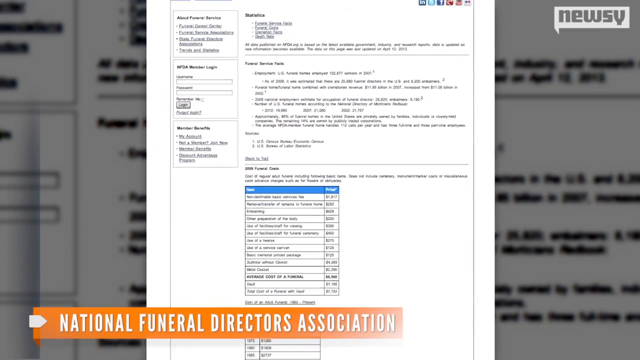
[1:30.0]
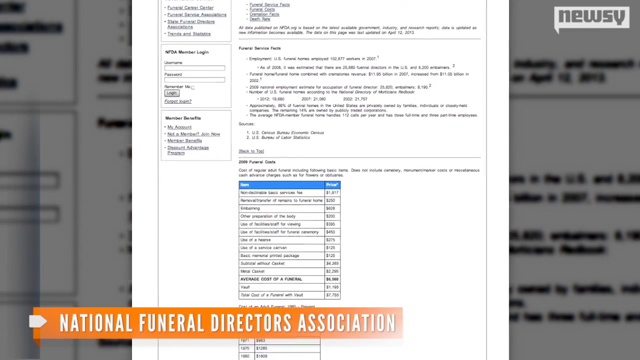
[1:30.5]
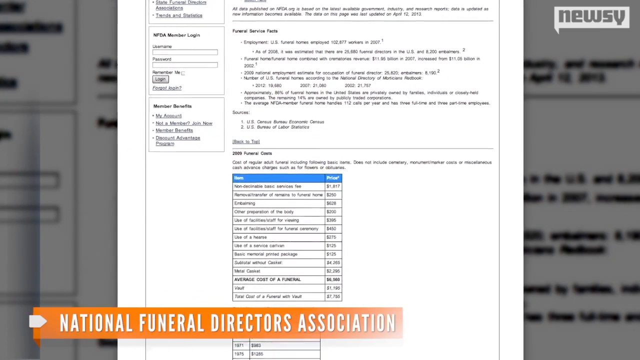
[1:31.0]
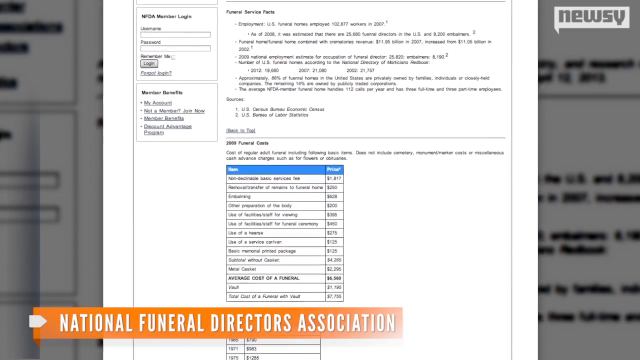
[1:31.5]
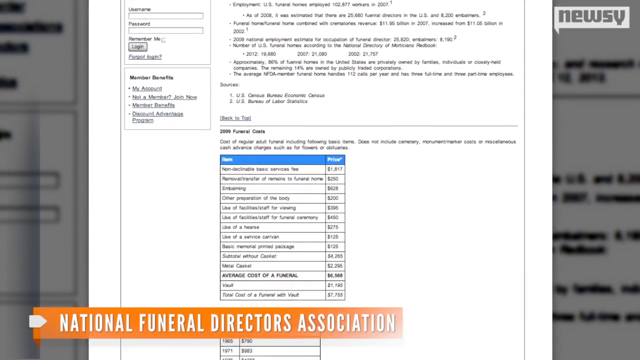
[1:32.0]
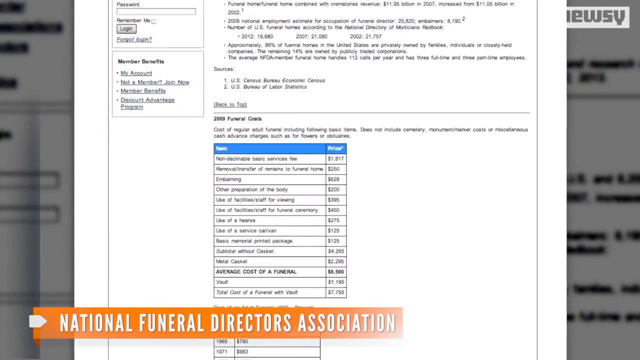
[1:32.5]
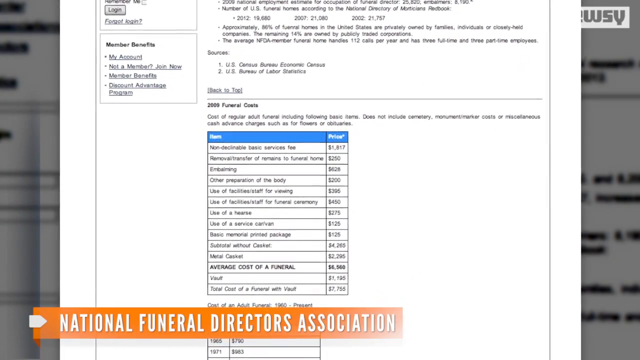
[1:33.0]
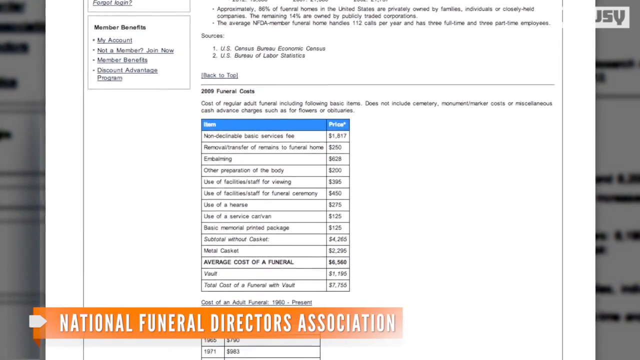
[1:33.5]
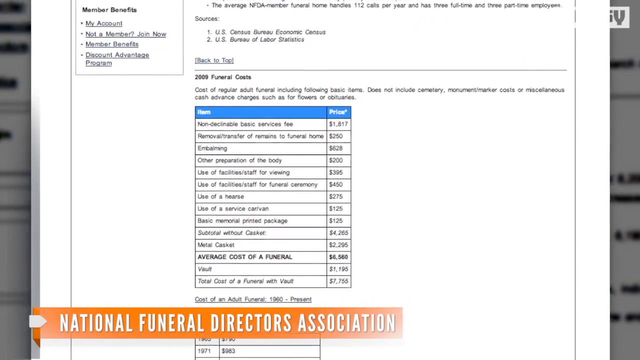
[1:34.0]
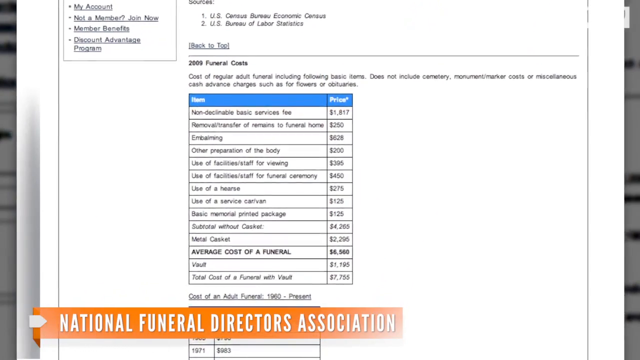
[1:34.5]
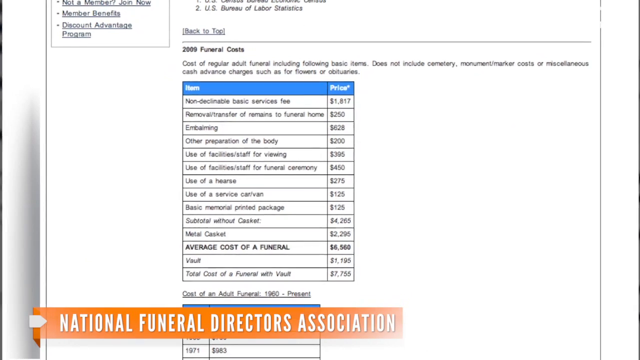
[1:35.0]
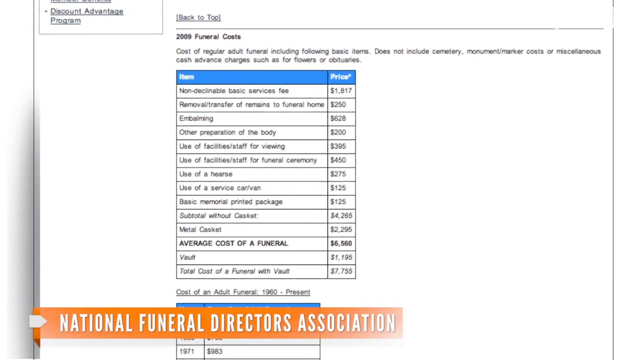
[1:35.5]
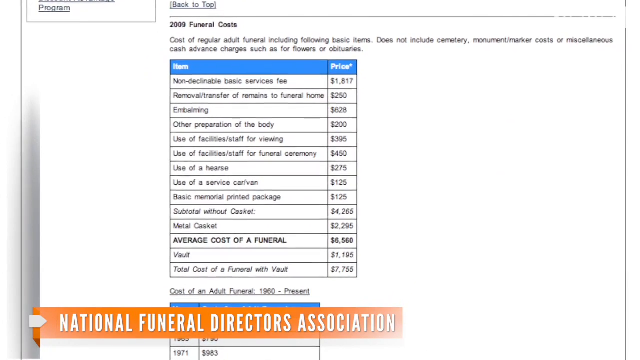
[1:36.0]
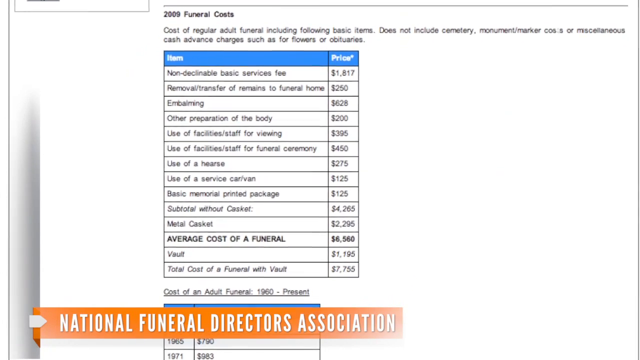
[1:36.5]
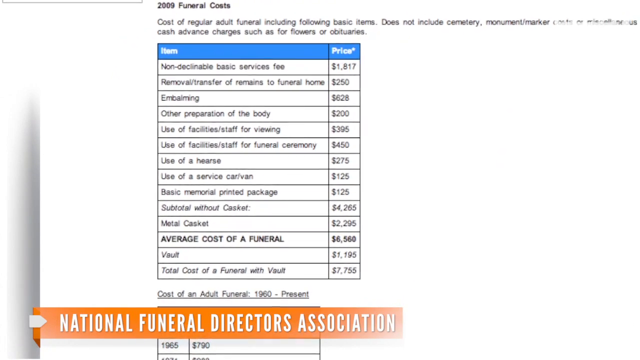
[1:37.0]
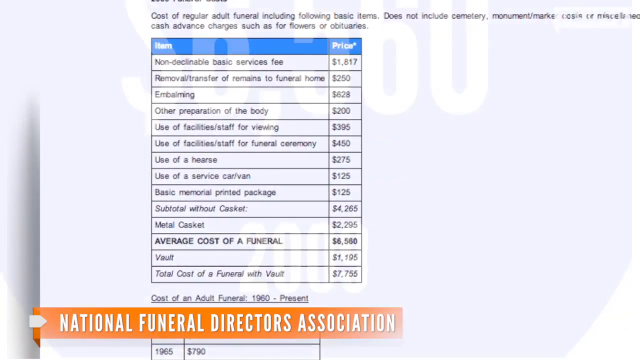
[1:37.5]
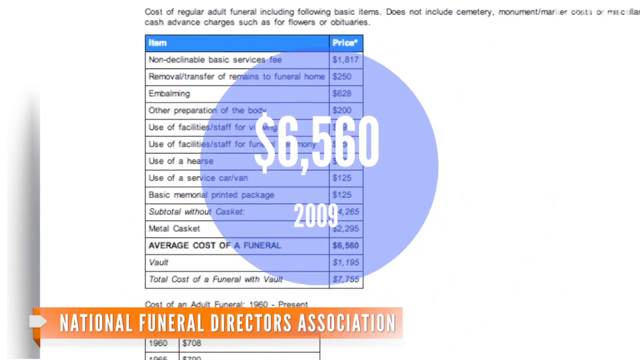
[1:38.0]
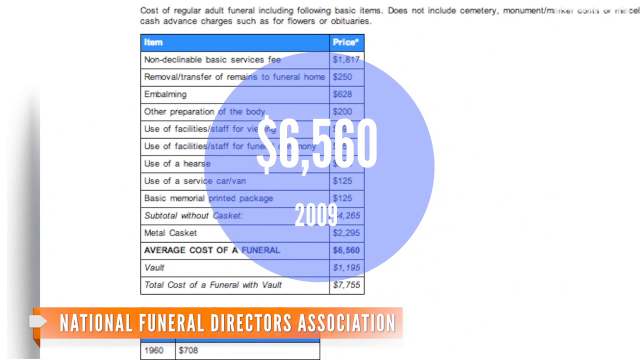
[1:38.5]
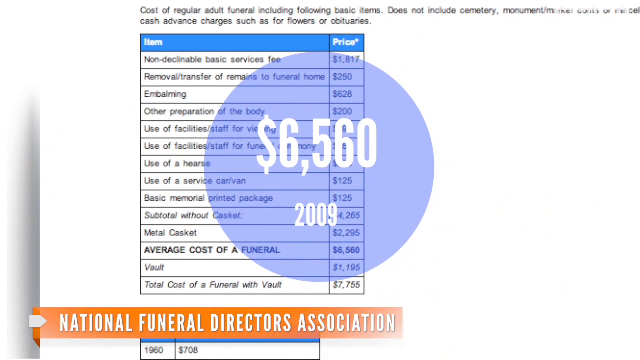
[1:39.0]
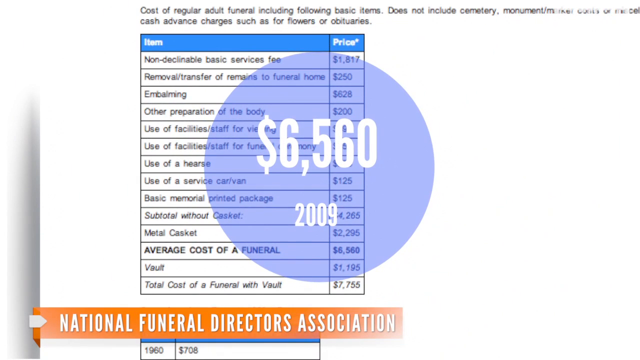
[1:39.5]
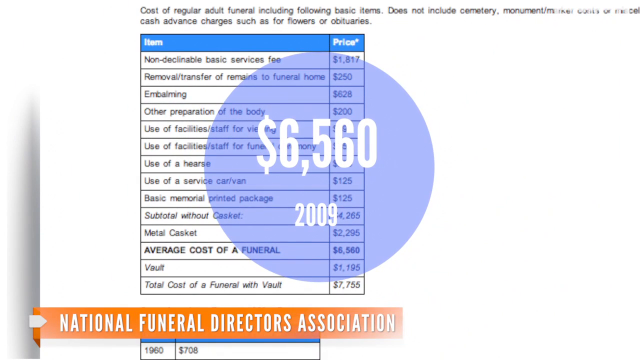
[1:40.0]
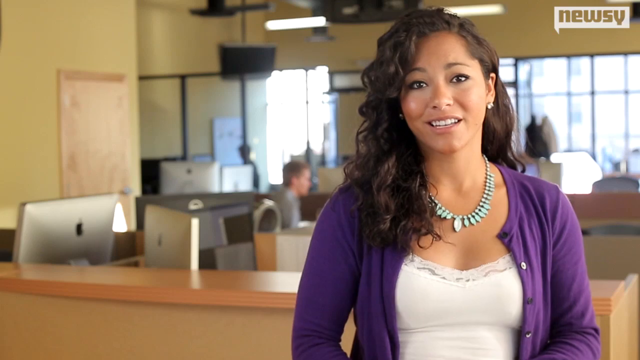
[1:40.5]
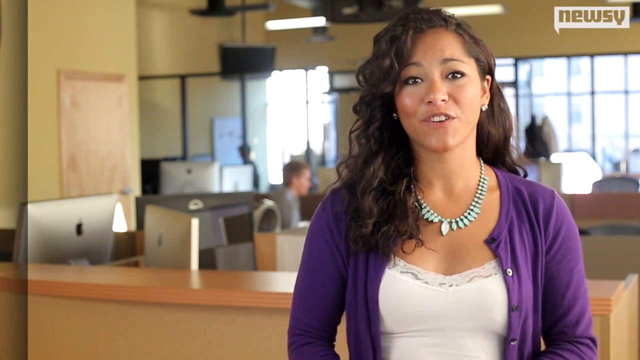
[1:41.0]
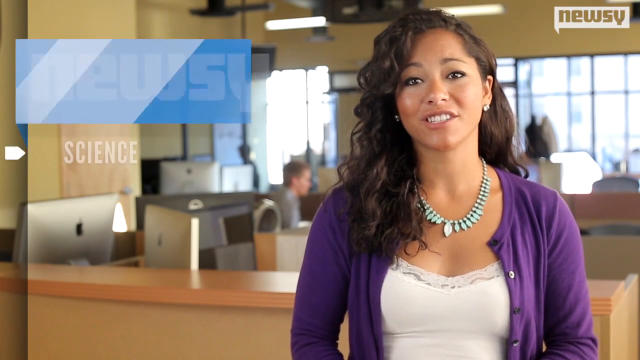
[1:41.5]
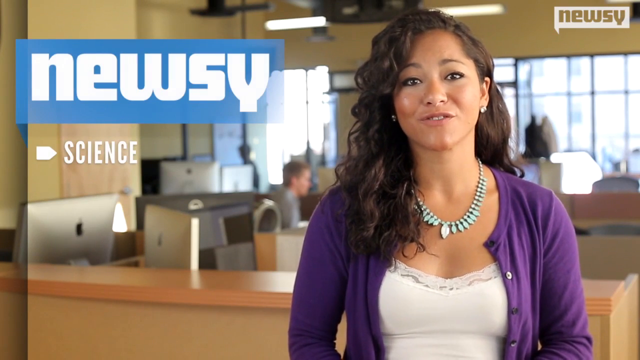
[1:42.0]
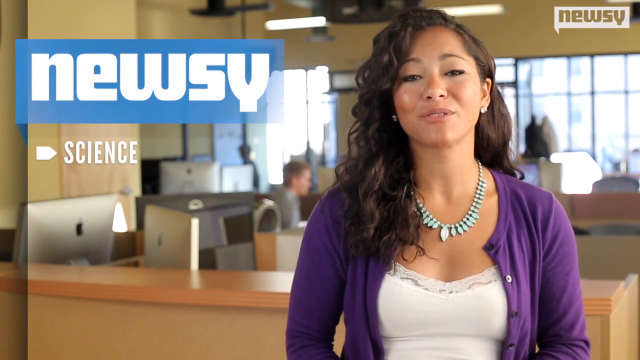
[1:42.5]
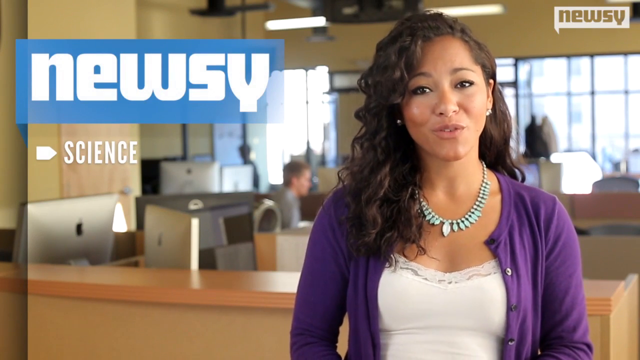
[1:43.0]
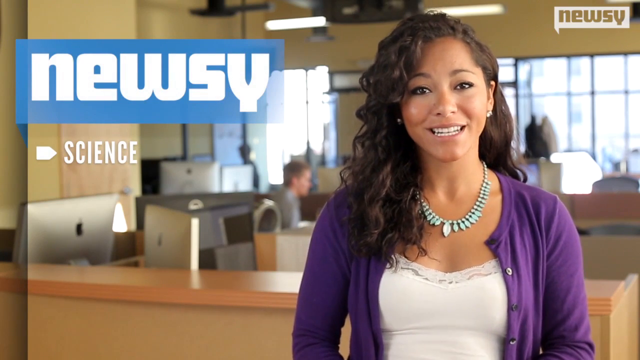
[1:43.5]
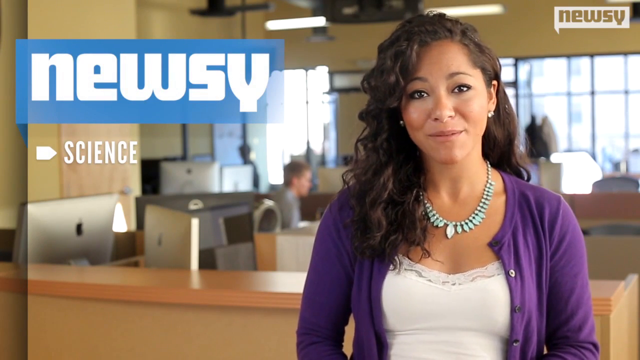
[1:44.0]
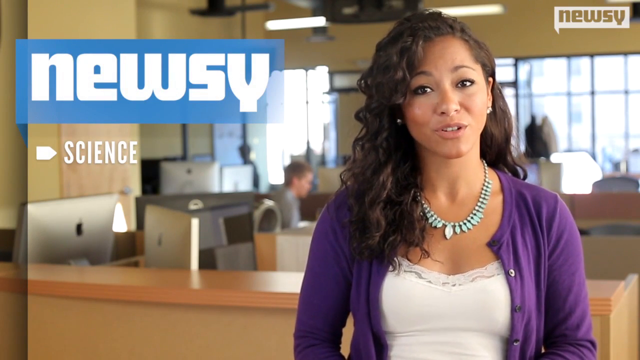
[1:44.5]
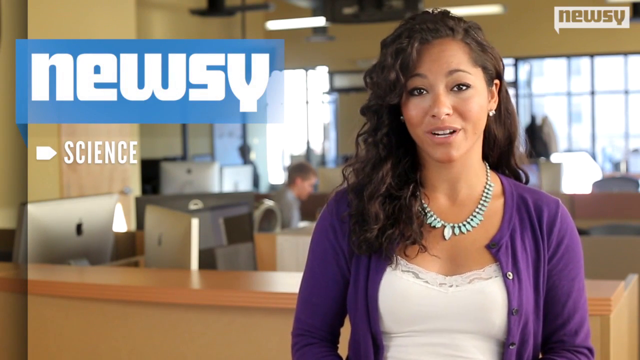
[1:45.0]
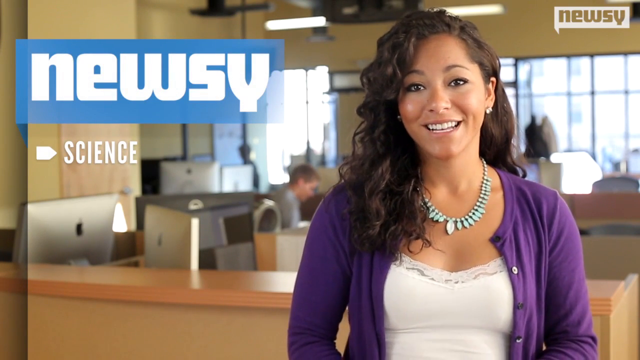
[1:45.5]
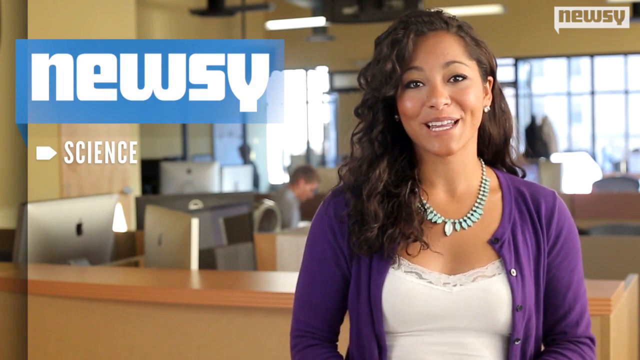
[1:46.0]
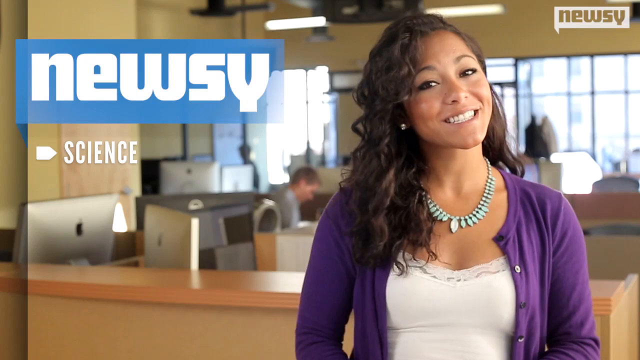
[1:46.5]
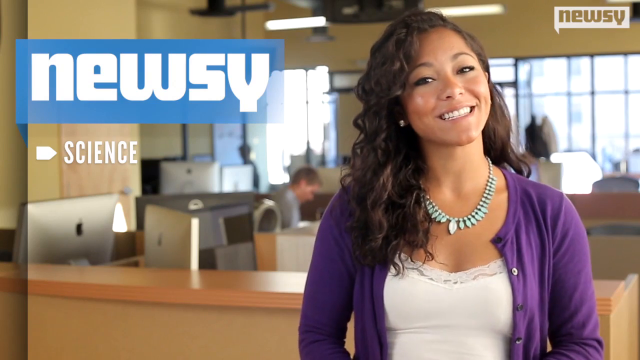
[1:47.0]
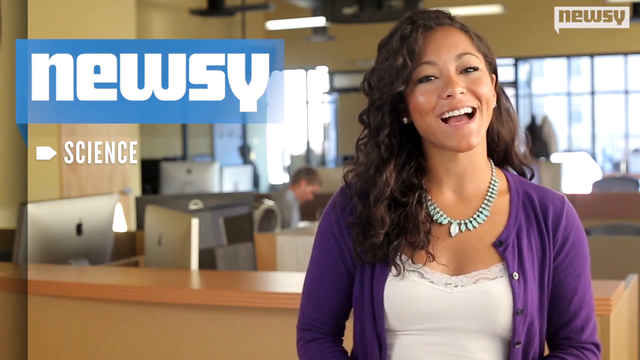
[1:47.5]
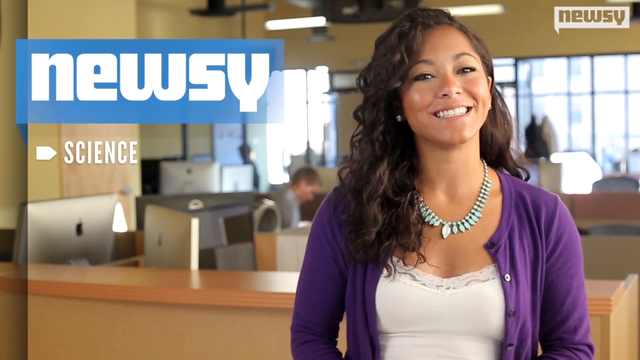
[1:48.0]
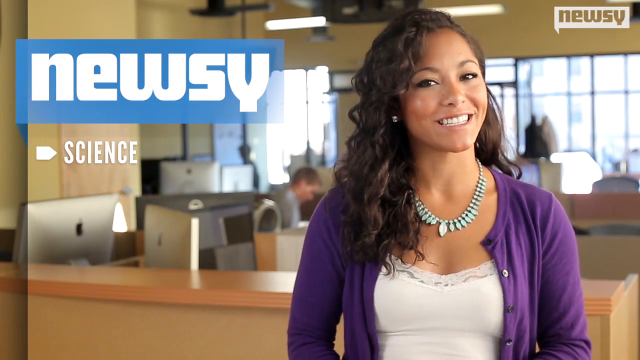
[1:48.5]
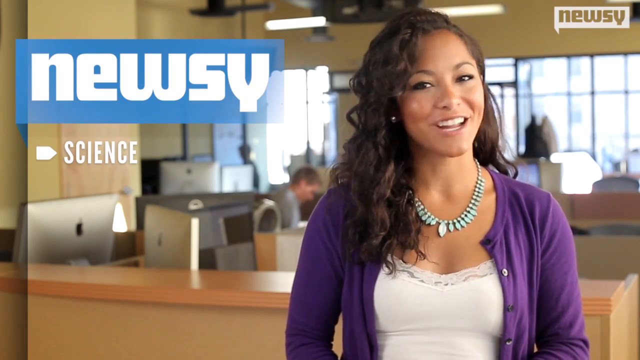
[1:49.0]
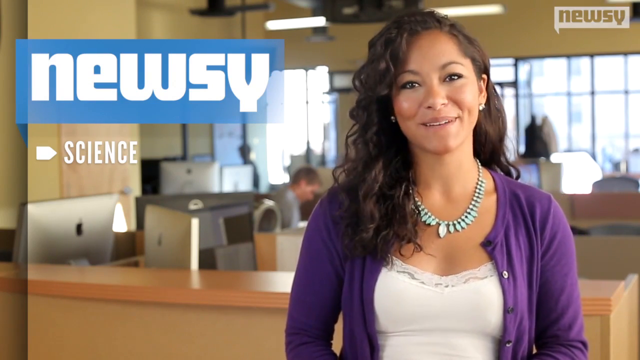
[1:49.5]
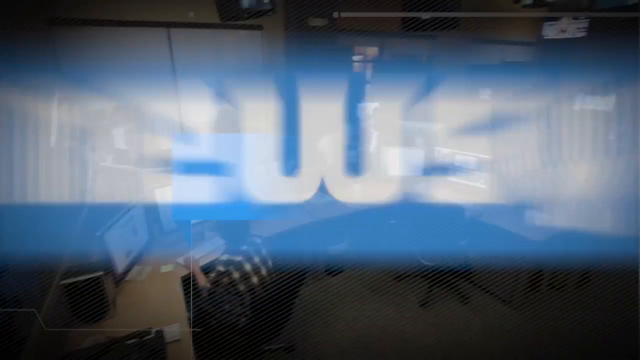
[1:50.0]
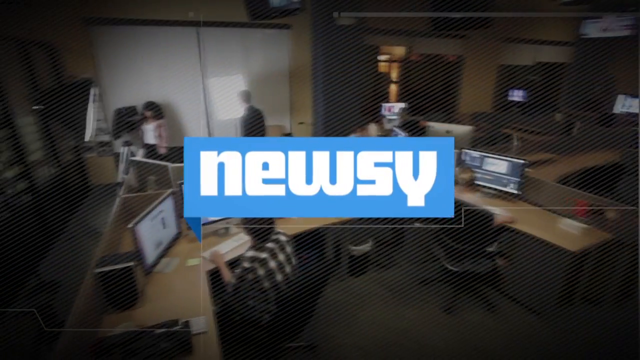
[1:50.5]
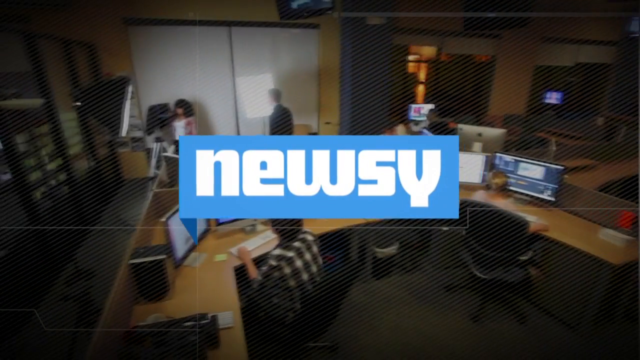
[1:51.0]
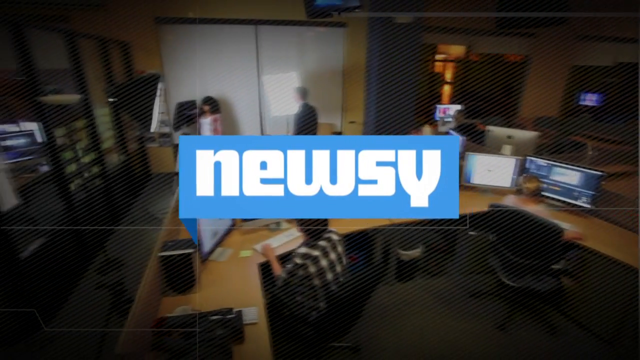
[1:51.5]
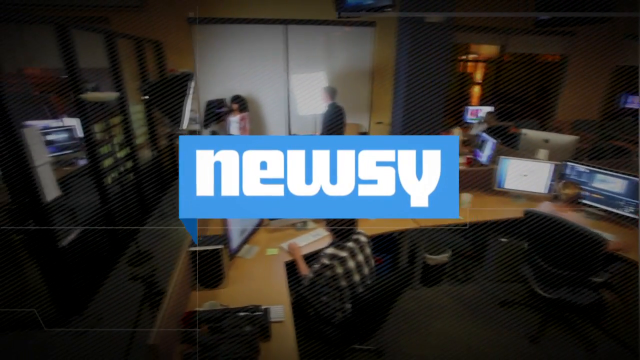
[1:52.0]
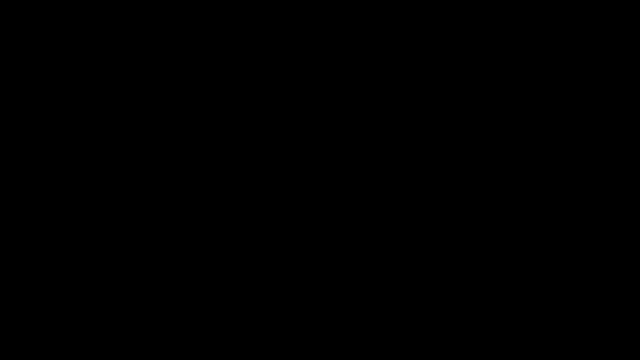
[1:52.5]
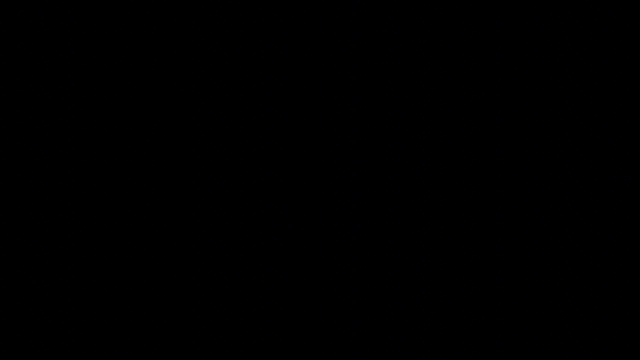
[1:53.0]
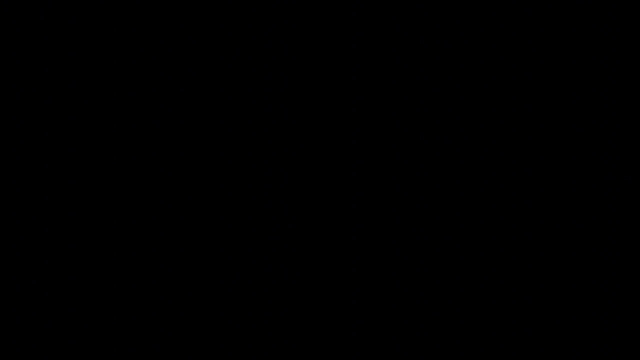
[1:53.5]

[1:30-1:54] The name National Funeral Directors Association appears along with the figure 6590. The video then goes back to the news anchor, who presents from New Zealand. The video shows that cremated remains can be sent to space at different distances, including the Moon, Earth's orbit and the Voyager option.